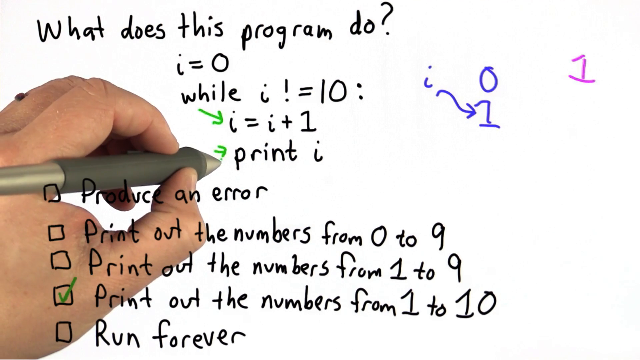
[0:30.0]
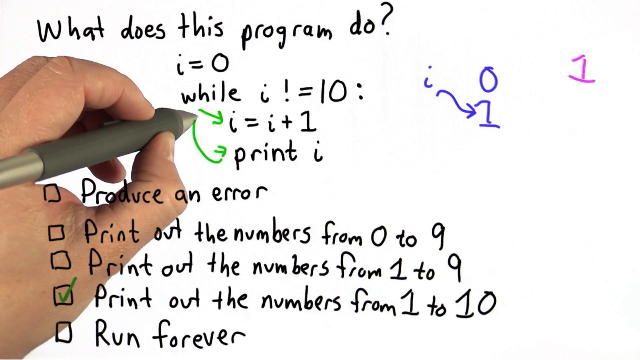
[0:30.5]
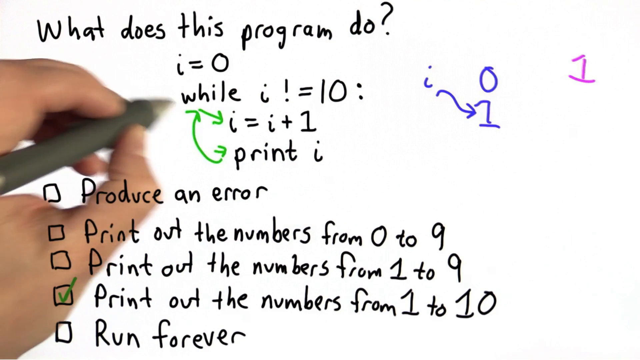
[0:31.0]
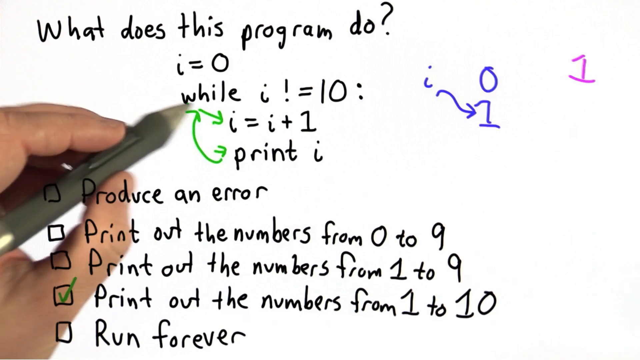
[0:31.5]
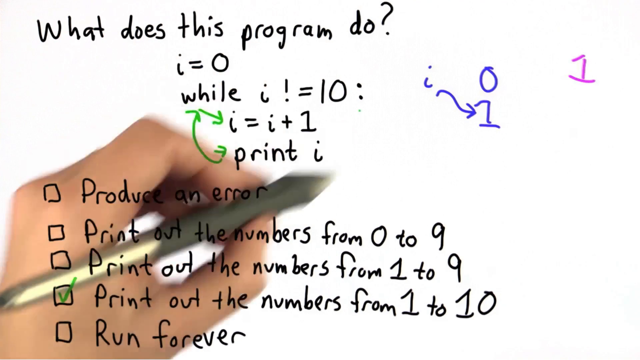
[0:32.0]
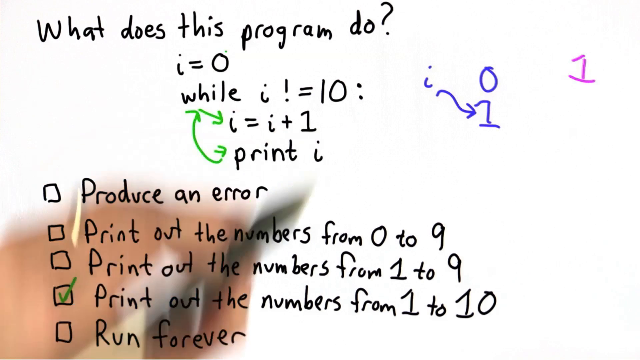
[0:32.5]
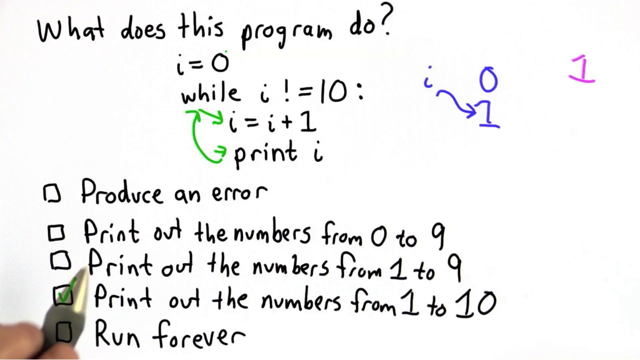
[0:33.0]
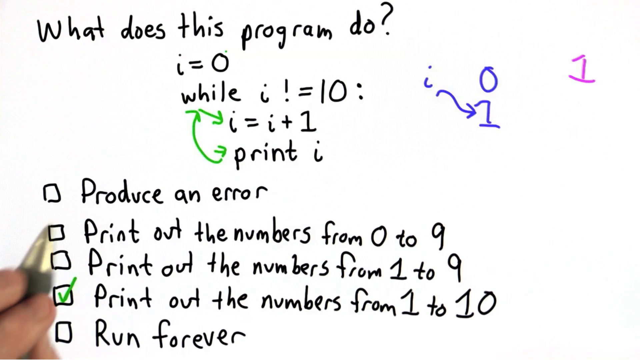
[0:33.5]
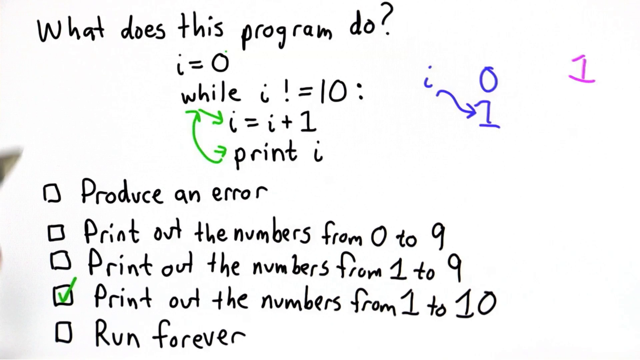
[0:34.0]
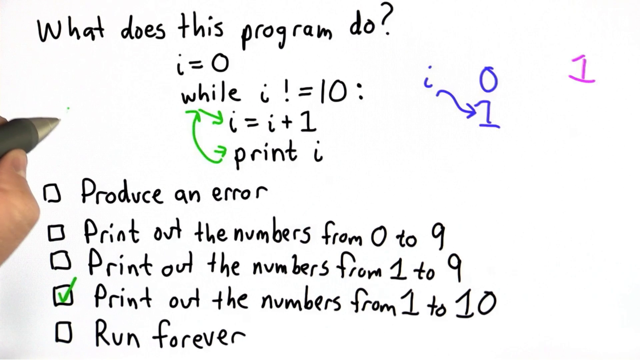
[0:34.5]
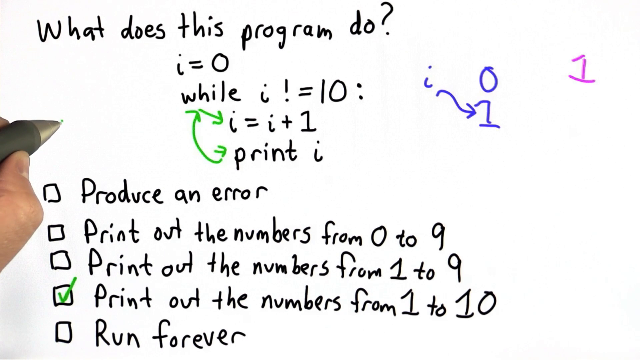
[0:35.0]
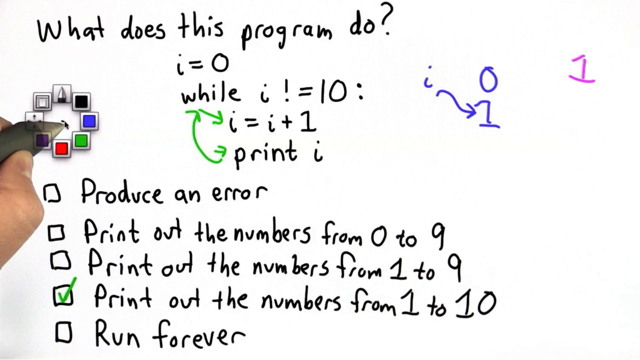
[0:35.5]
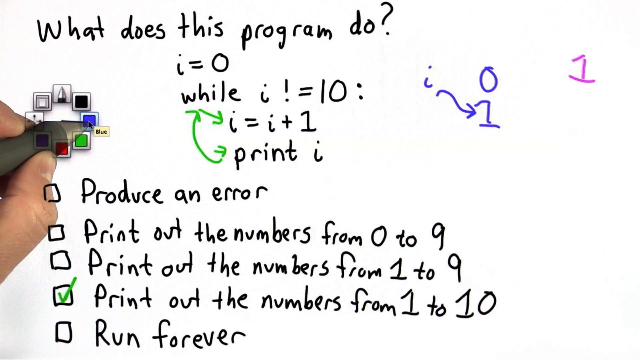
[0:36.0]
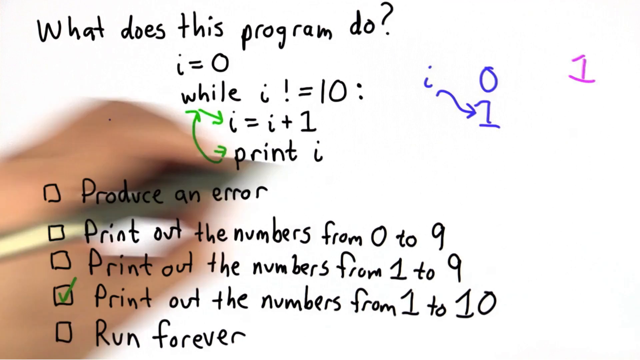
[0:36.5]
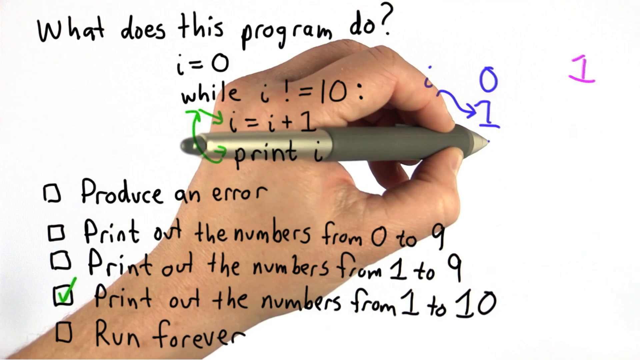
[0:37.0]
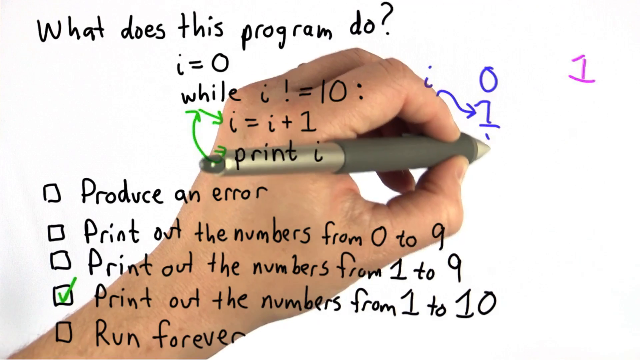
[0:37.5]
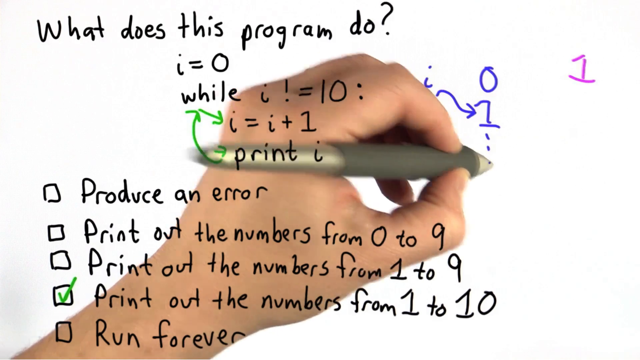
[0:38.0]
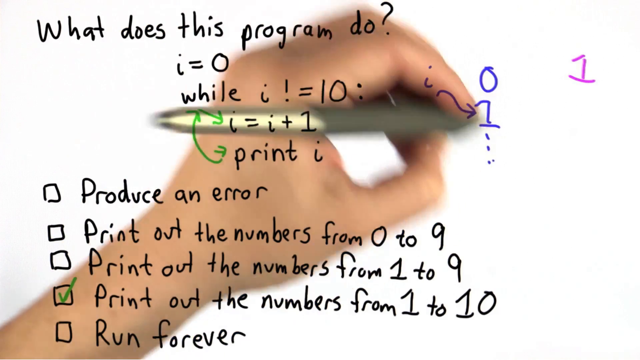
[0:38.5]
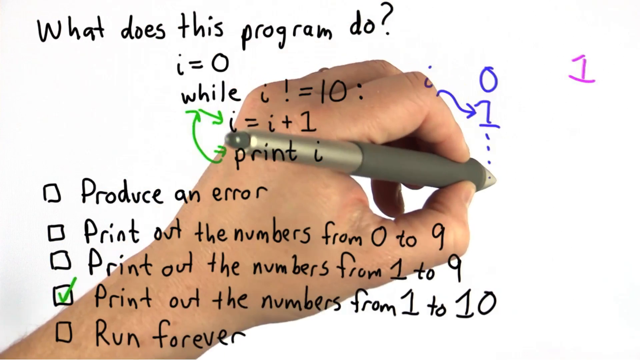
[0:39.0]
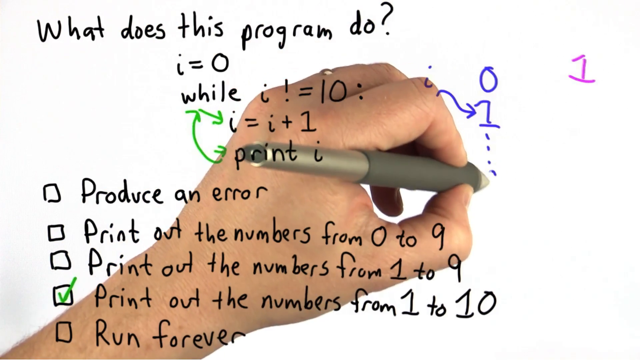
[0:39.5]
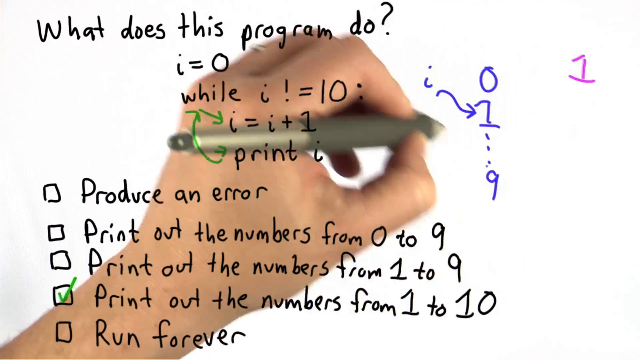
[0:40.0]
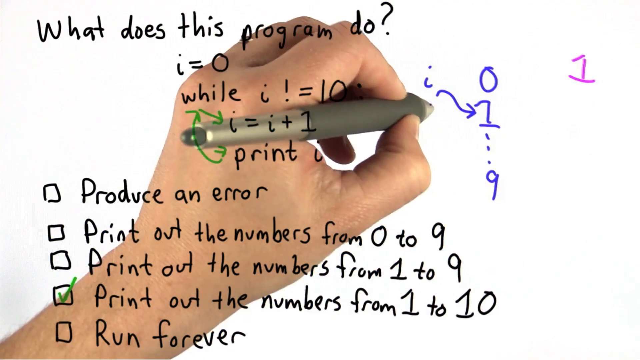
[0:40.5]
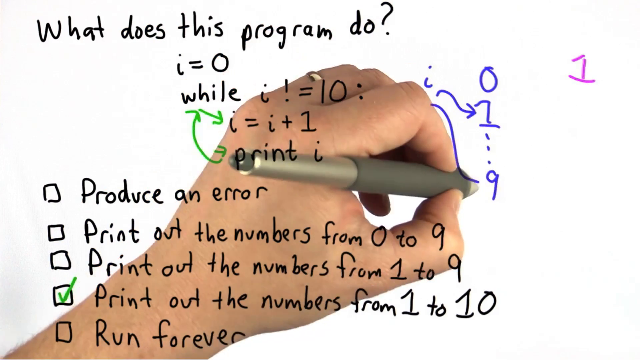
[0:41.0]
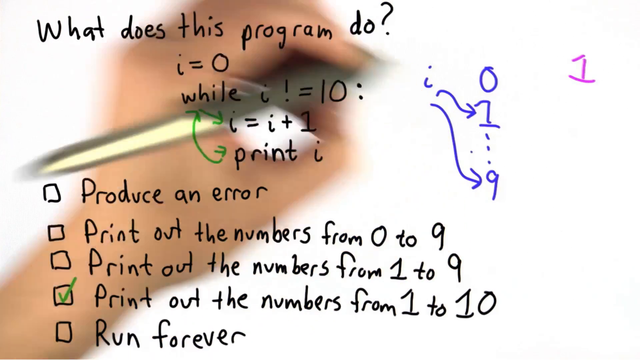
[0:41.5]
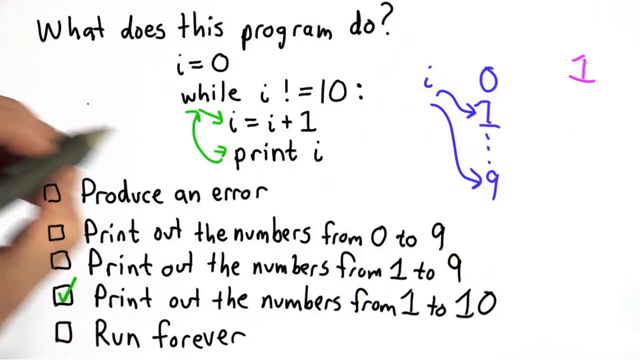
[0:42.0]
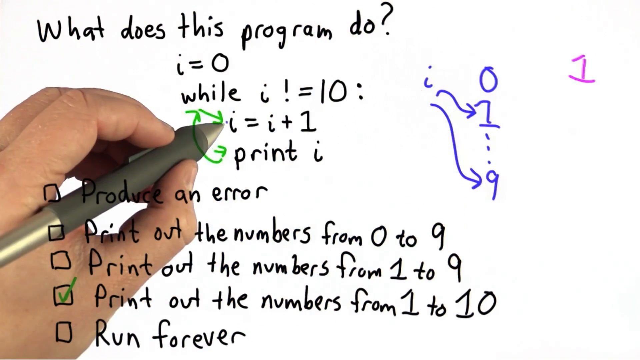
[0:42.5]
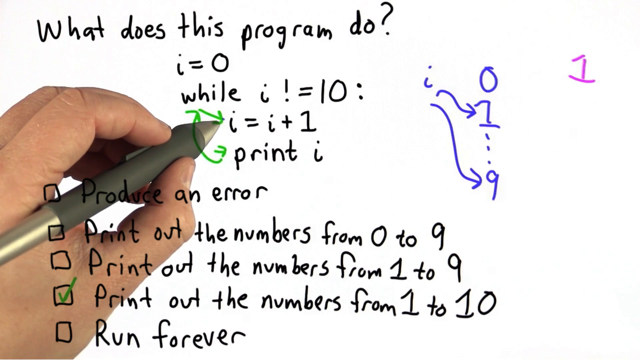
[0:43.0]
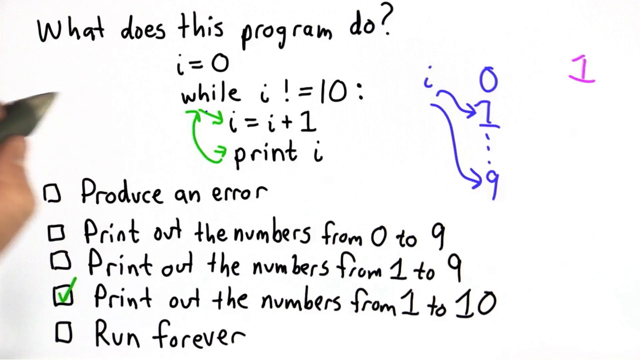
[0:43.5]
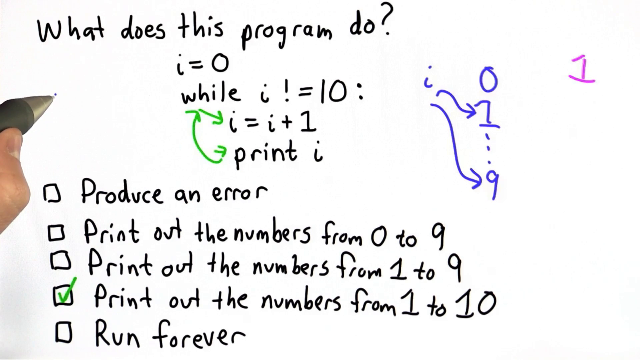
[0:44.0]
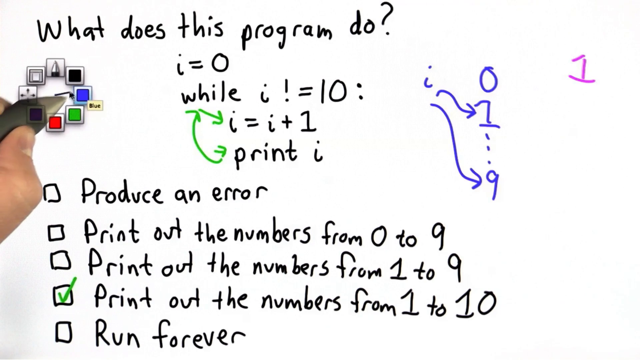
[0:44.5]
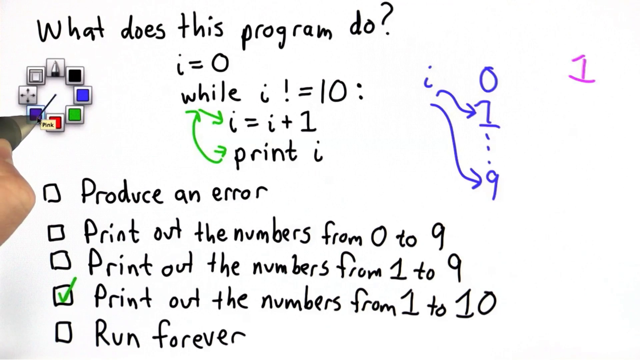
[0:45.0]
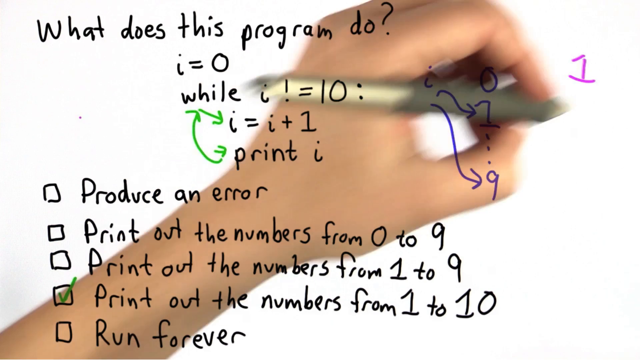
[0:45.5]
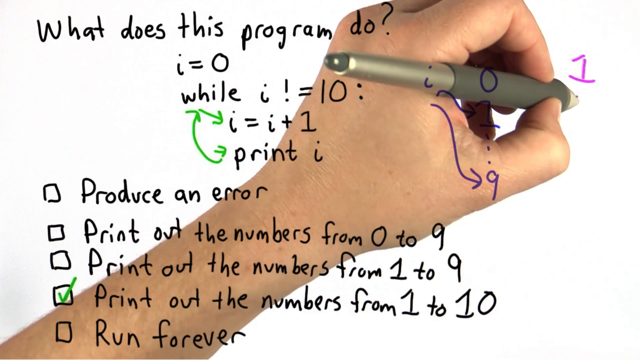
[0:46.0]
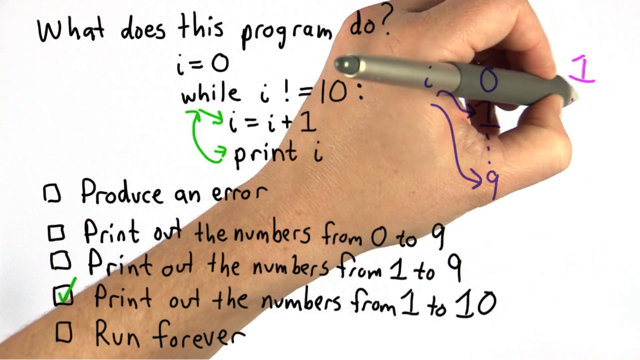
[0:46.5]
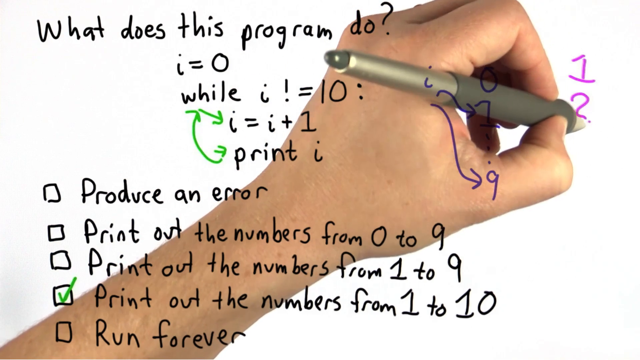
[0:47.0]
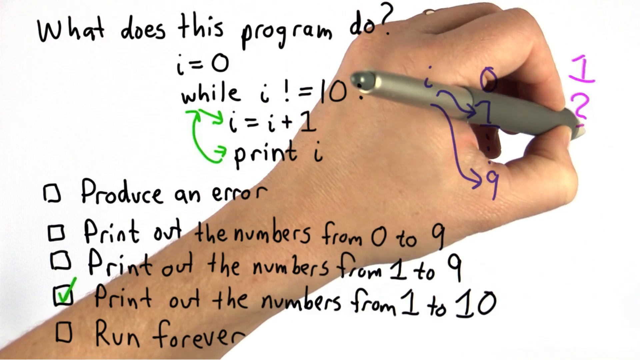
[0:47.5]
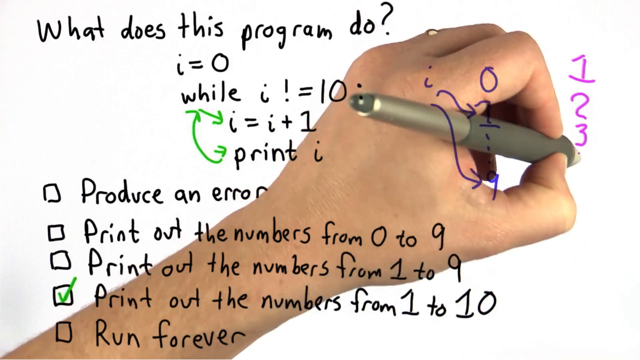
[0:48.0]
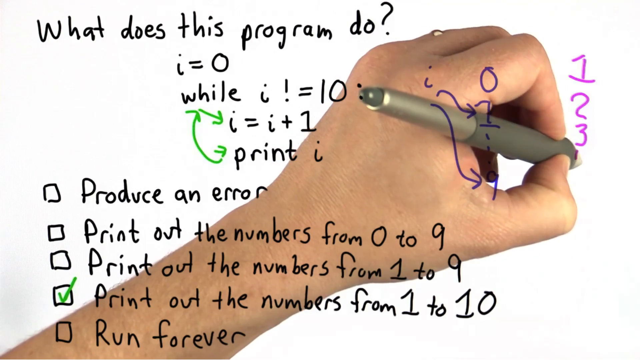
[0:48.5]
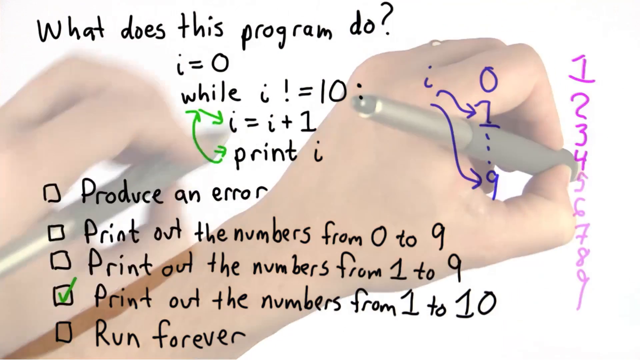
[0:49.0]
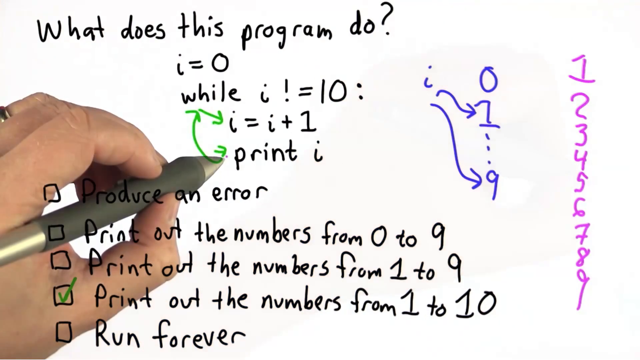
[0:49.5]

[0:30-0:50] The white page shows the question handwritten in black: "what does this program do? i = 0 while i != 10: i = i + 1 print i". Handwritten boxes on the left of the screen read "produce an error", "print out the numbers from 0 to 9", "print out the numbers from 1 to 9", "print out the numbers from 1 to 10" and "run forever", with a green tick in the fourth box. On the right of the screen, in blue, are a small i and then a 0, with a swirly arrow from the i down to a blue 1 underneath the 0; across from this, on the far right, is a purple 1. A green arrow goes from the "while" to the small i underneath it, and a green bendy arrow with arrowheads on both ends runs from the "while" down to the "print" below. The colour wheel appears again, the colour changes to blue, and the pen draws a vertical dashed line of three dashes from the blue 1, writes a 9 underneath the dashes, and draws a swirly arrow from the blue small i down to the 9. The colour wheel appears again, the pen changes to purple, and the person writes the numbers 2, 3, 4, 5, 6, 7, 8 and 9 underneath the purple 1.